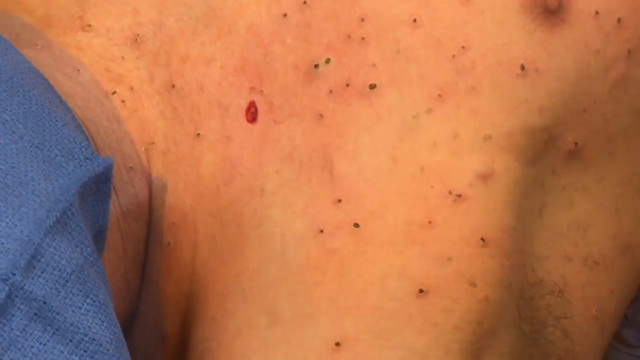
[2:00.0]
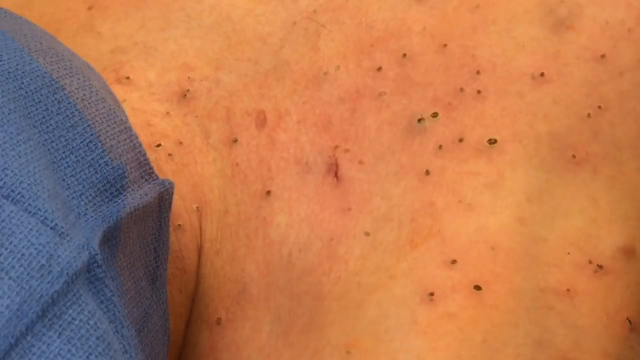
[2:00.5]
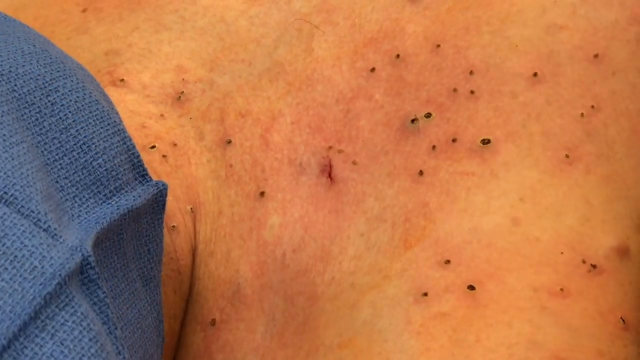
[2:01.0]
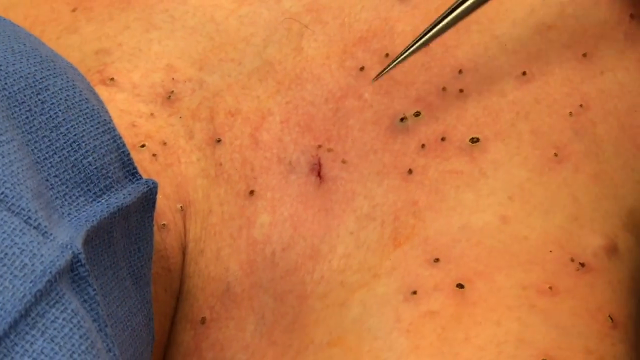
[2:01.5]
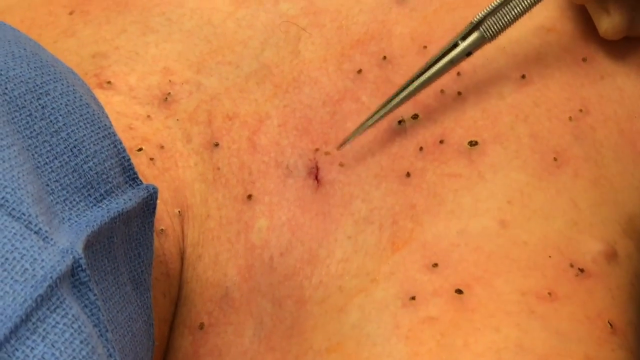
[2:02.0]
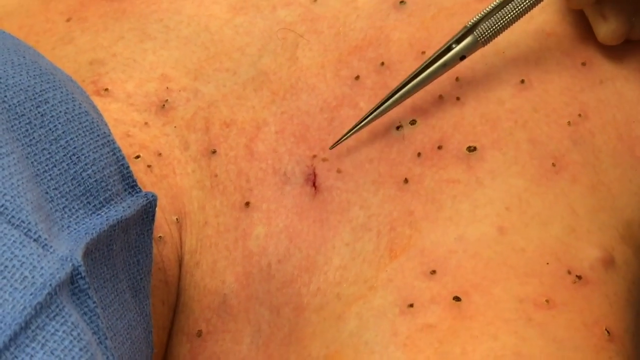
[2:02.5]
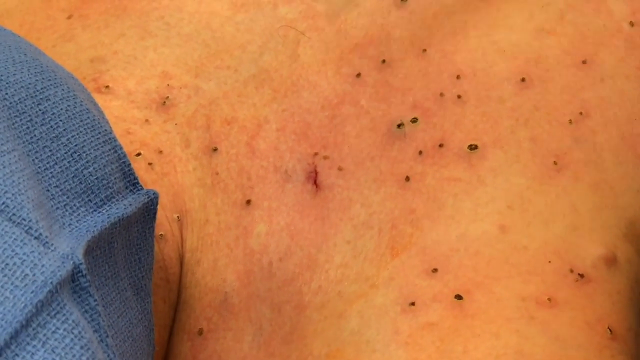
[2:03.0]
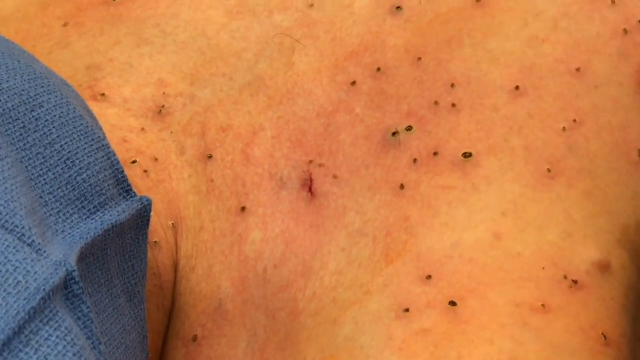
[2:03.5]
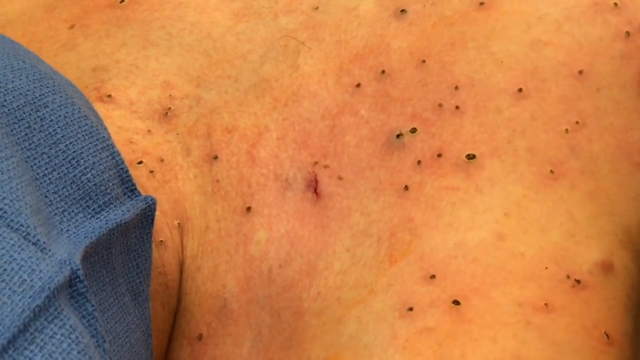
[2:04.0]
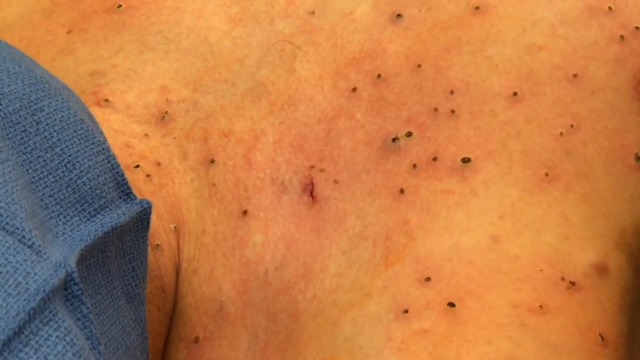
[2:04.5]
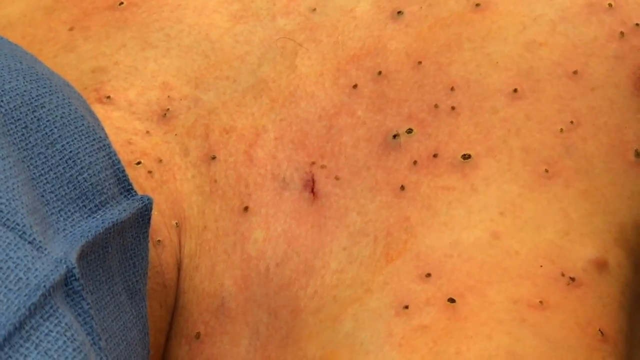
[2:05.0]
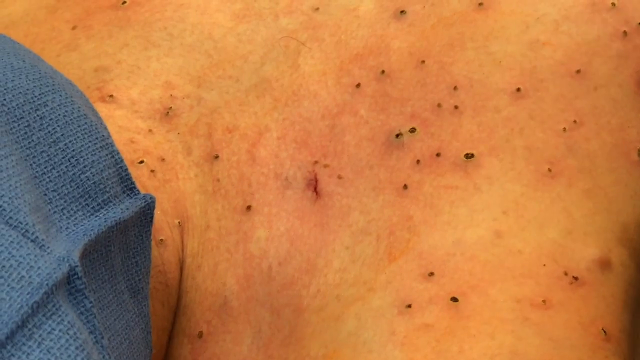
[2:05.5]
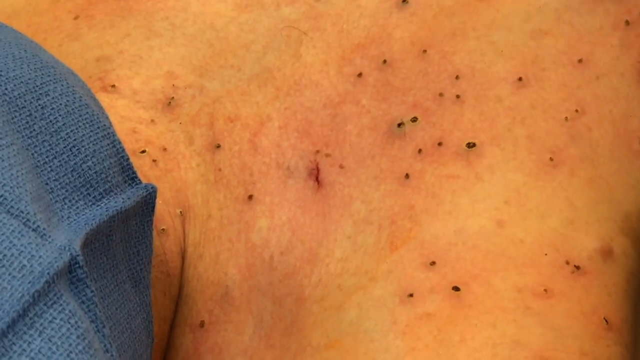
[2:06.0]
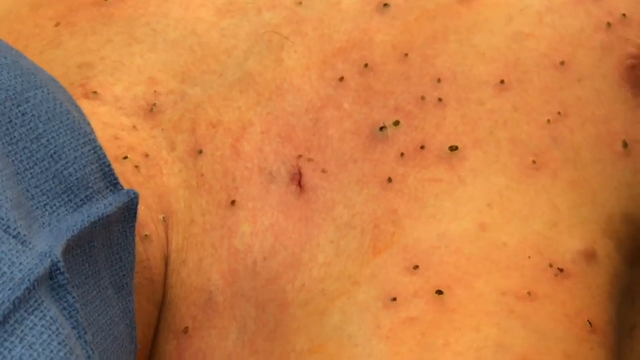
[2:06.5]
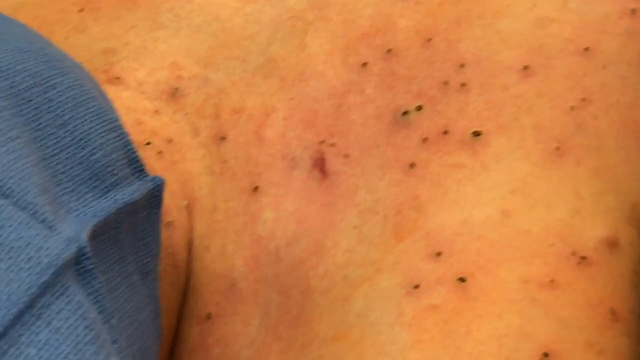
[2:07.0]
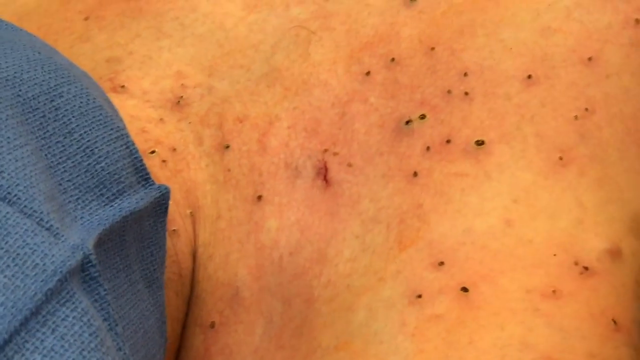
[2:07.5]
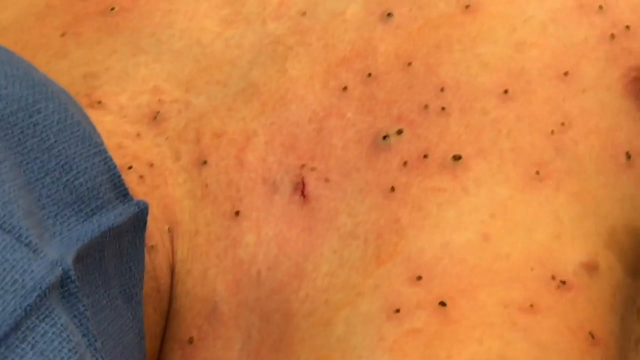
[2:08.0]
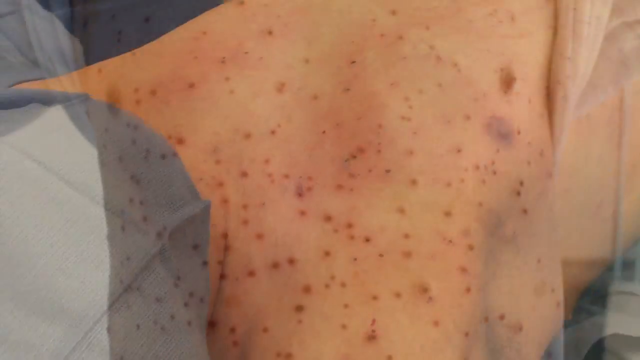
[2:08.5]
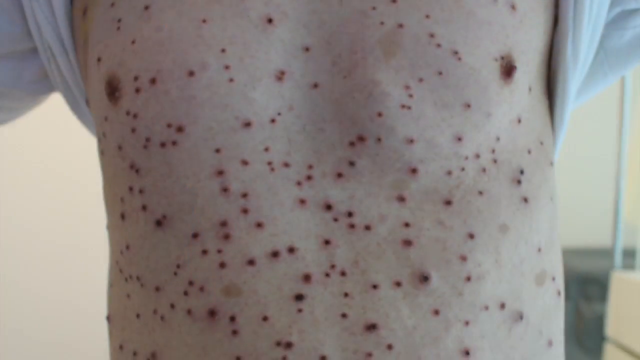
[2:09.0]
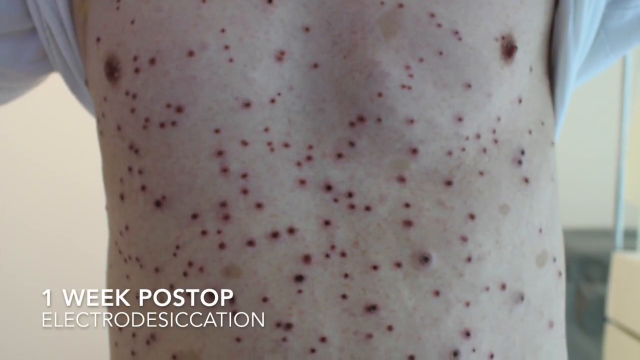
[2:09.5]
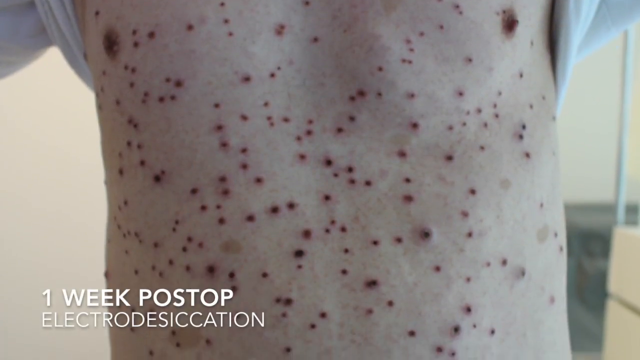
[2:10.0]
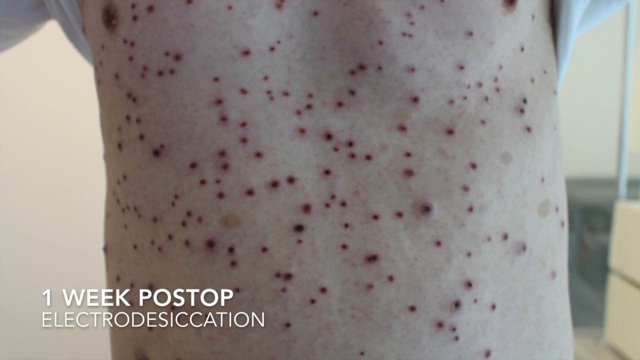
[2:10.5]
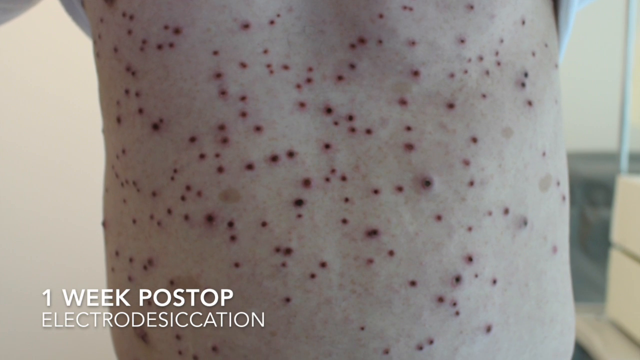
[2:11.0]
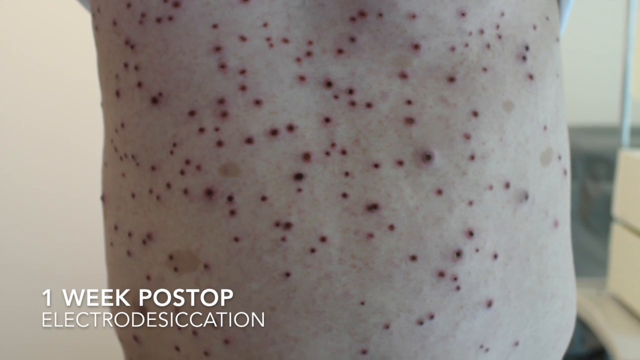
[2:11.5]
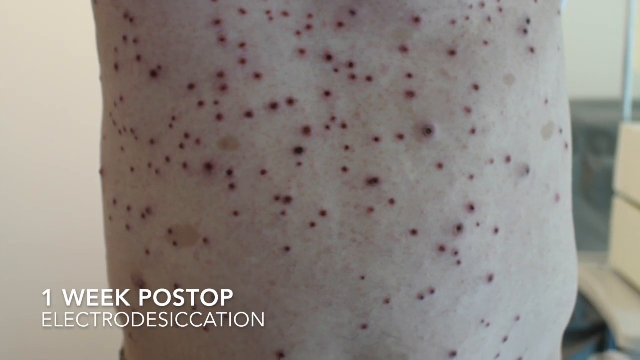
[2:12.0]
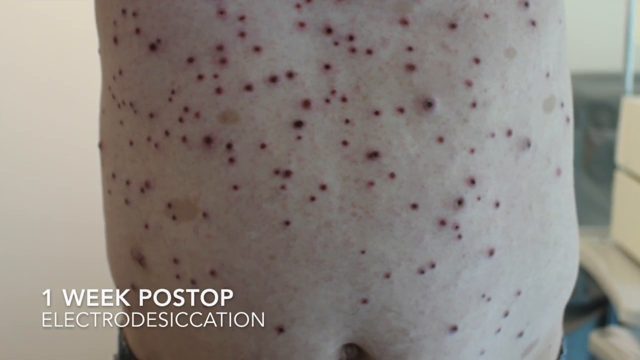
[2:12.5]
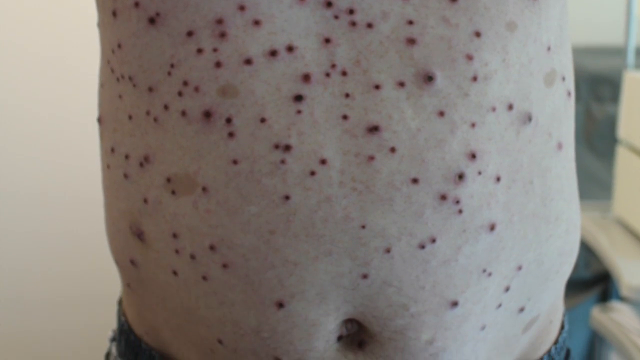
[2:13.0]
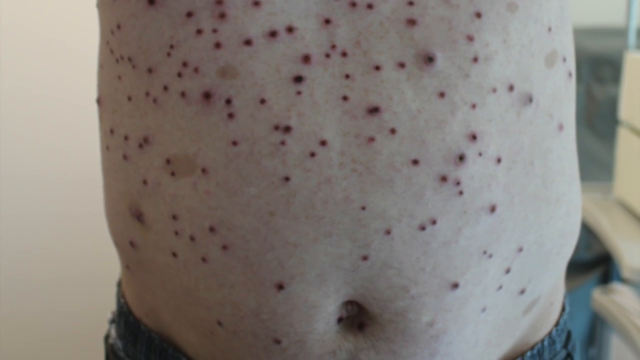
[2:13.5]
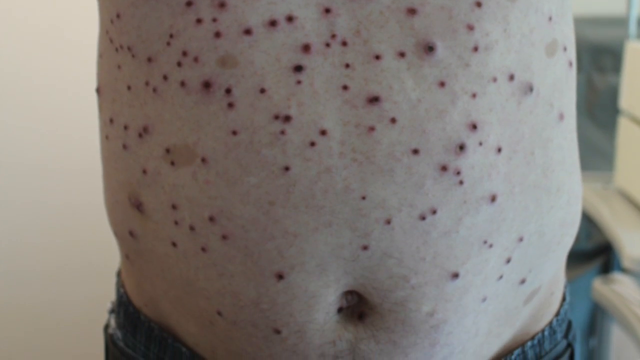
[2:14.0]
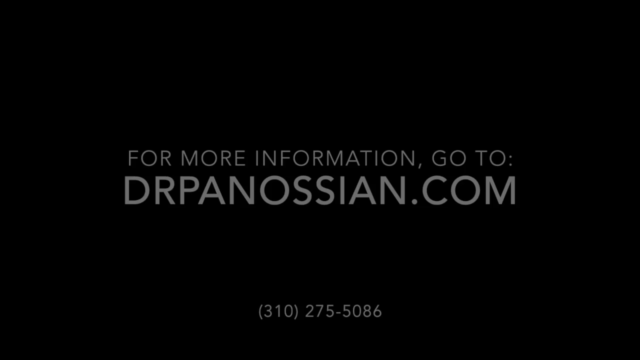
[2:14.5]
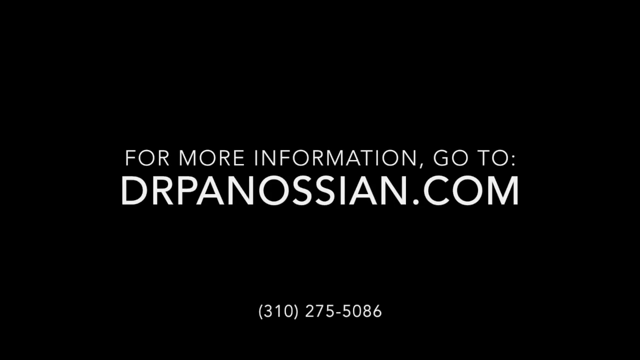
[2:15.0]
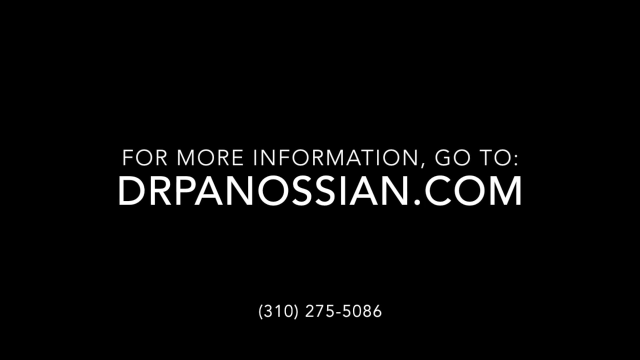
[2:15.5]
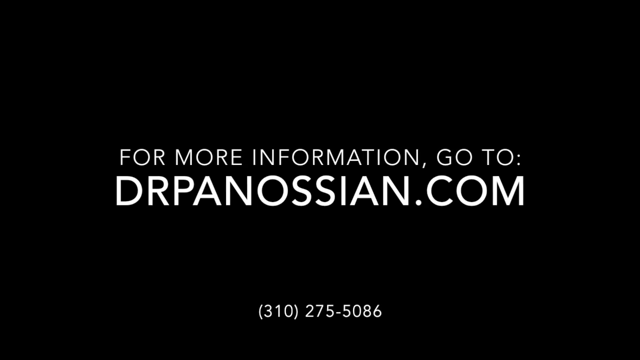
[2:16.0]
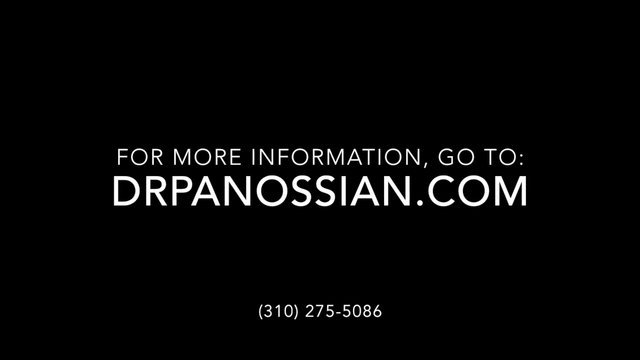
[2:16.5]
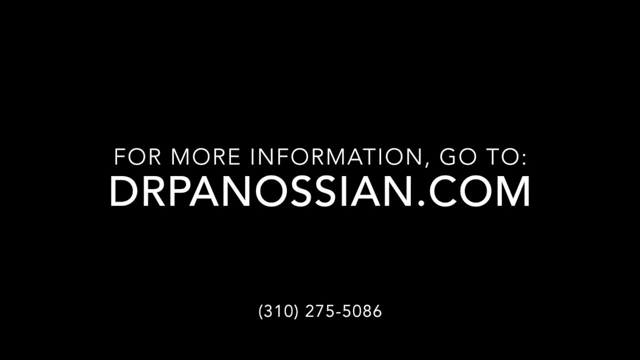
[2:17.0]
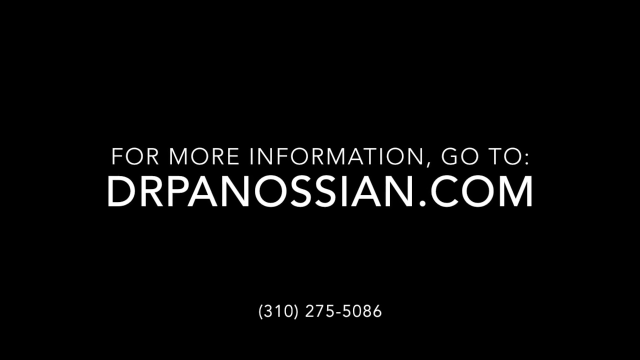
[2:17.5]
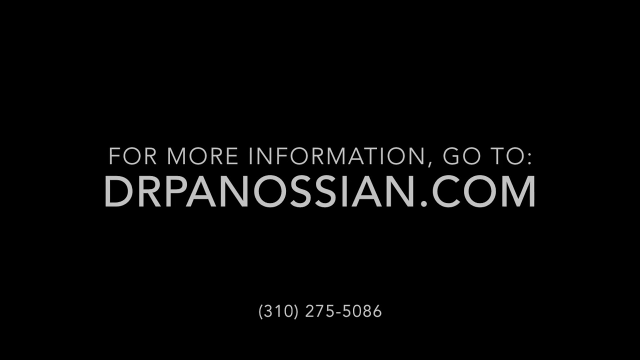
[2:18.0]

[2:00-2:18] The dermatologist checks the incision from the large neurofibroma that was removed; the incision is closed and not bleeding. He circles around it with surgical tweezers held in his right hand, which wears a white nitrile glove. The patient, a Caucasian male, is unconscious, with a blue surgical towel or sheeting over his face. He has many neurofibromas across his chest and stomach; the view mainly shows his right side, where the others have been burned off and appear as small black dots across his chest and right side. His right areola and nipple are visible. Next comes an image one week post-op: the patient stands upright in a white t-shirt pulled up to show the healing scabs from the surgery, visible from the chest down to the belly button. Many tiny scabs from burned neurofibromas cover his whole chest and both sides, and both nipples are visible. Behind him is a light tan wall in a brightly lit room, and white text at the bottom left corner reads "one week post-op electrodesiccation". The view pans down to just at the patient's belly button. The final panel is black with white text reading "for more information go to drpanosian.com", and beneath it a phone number, "(310) 275-5086".